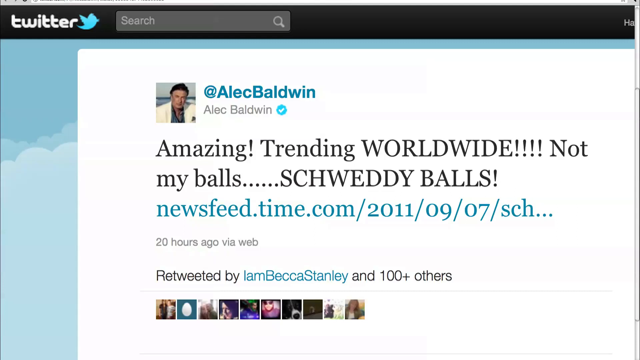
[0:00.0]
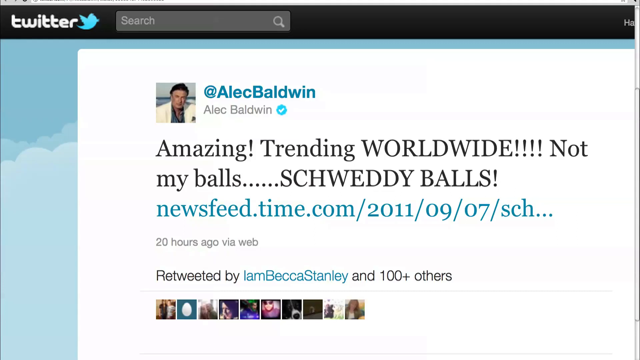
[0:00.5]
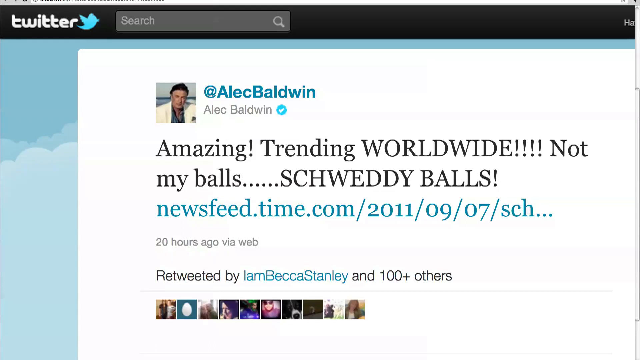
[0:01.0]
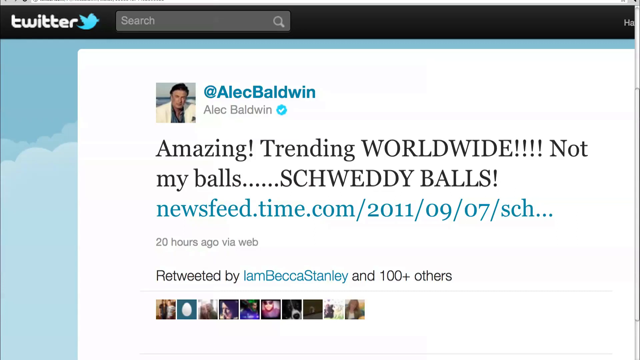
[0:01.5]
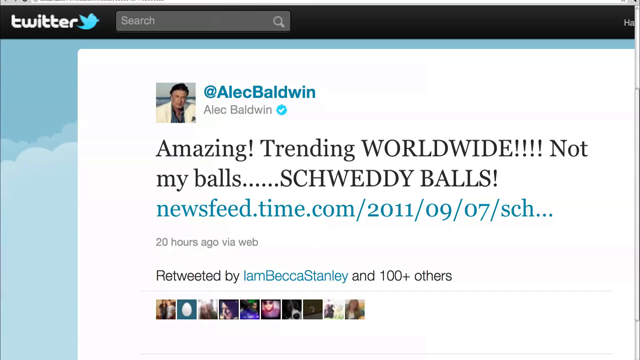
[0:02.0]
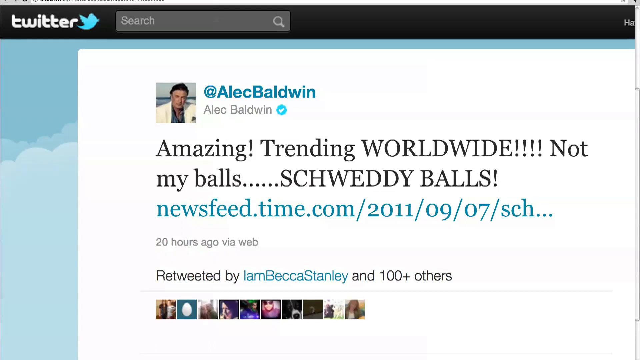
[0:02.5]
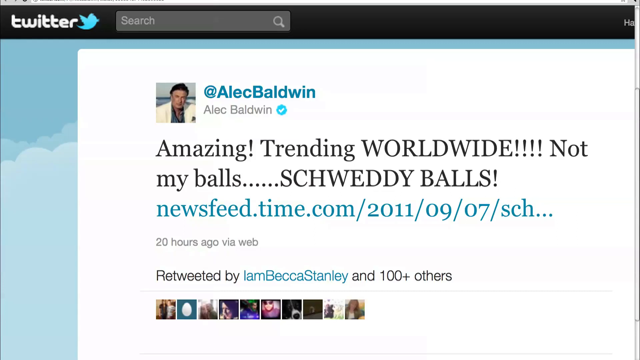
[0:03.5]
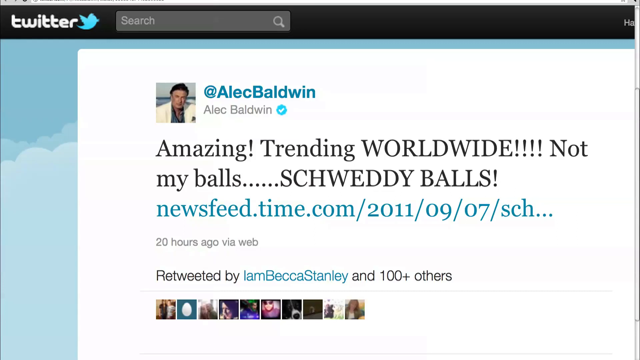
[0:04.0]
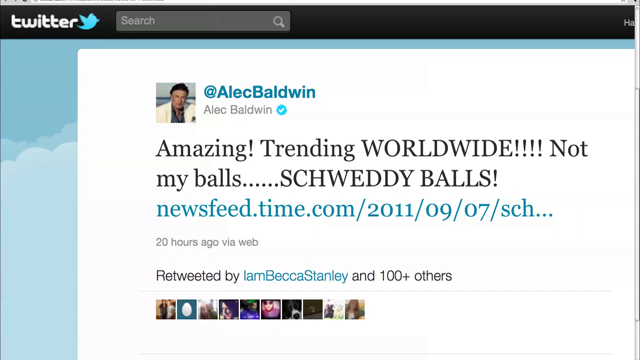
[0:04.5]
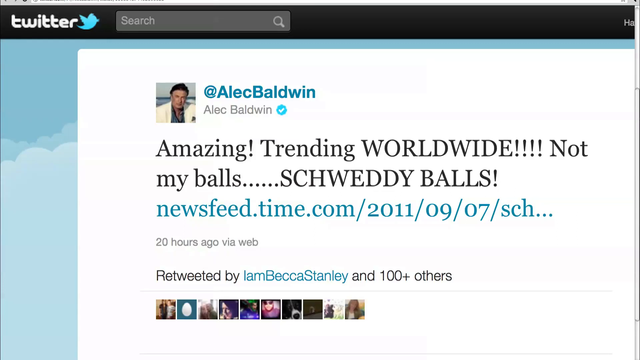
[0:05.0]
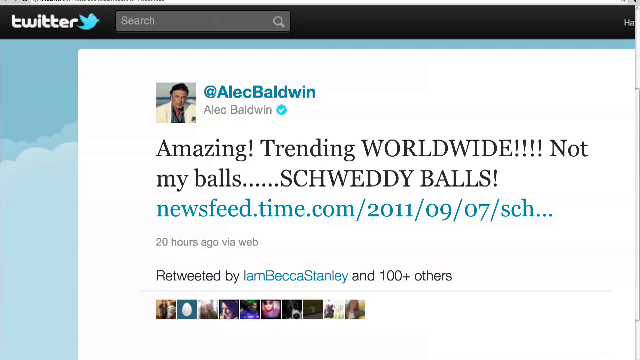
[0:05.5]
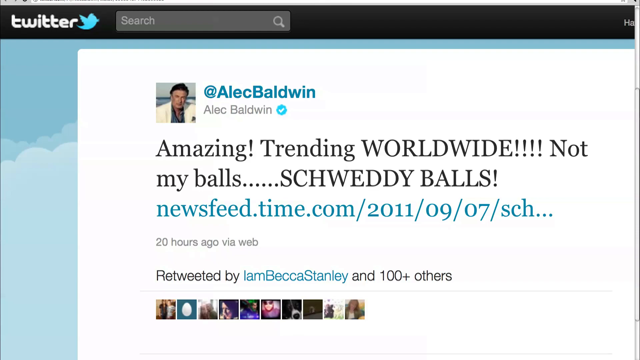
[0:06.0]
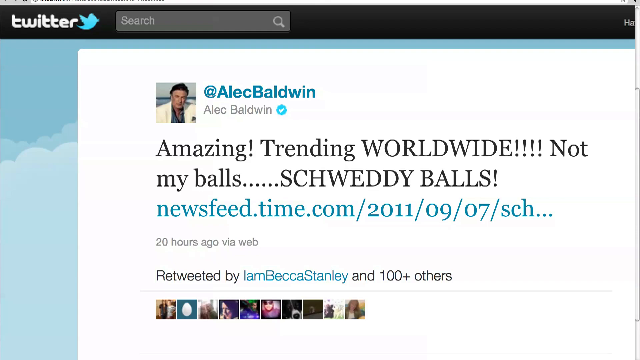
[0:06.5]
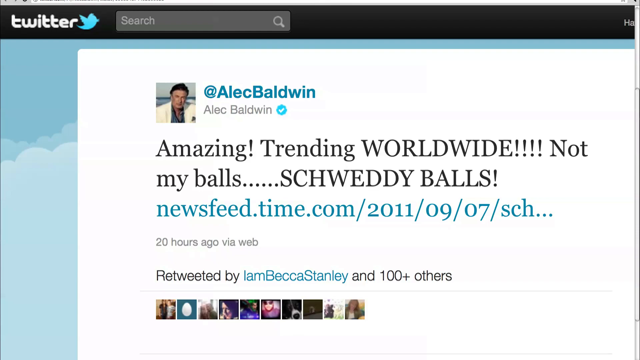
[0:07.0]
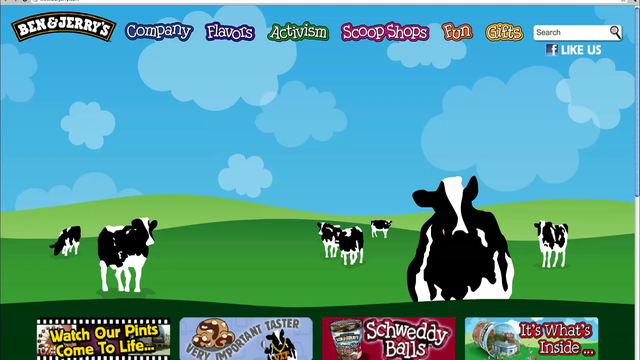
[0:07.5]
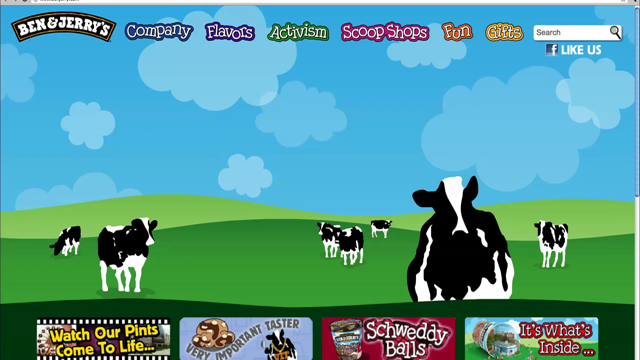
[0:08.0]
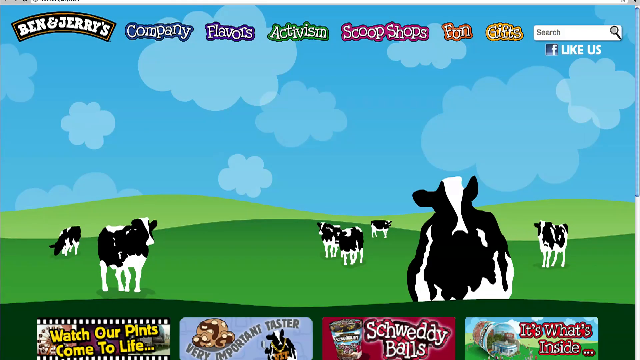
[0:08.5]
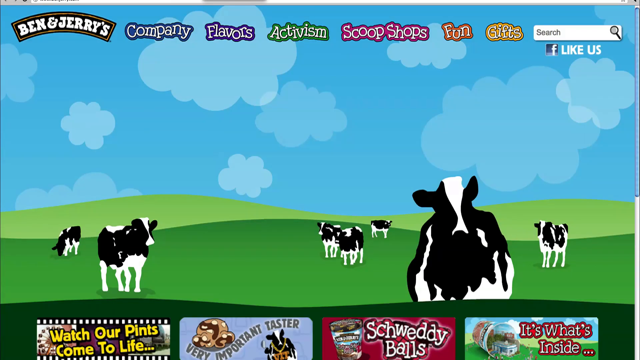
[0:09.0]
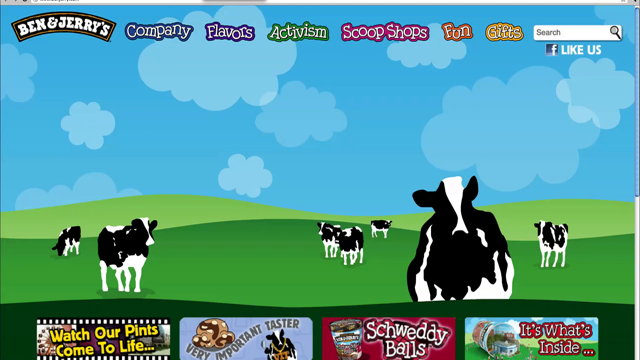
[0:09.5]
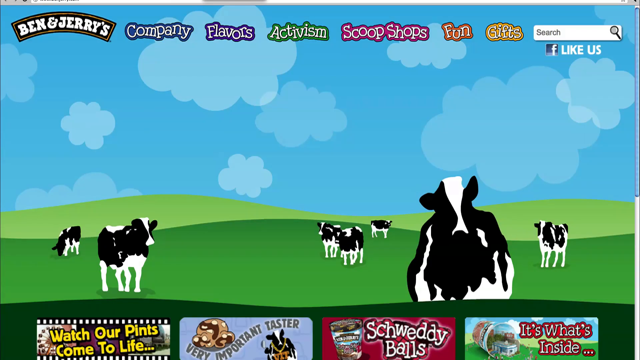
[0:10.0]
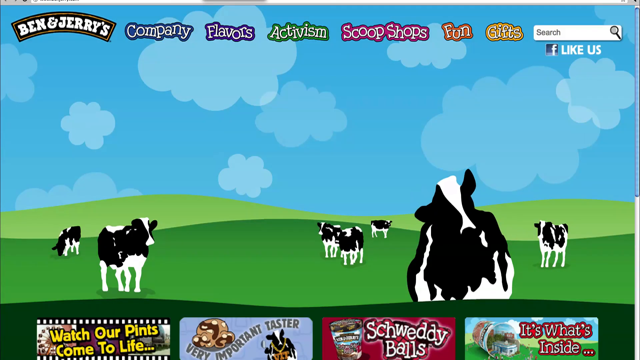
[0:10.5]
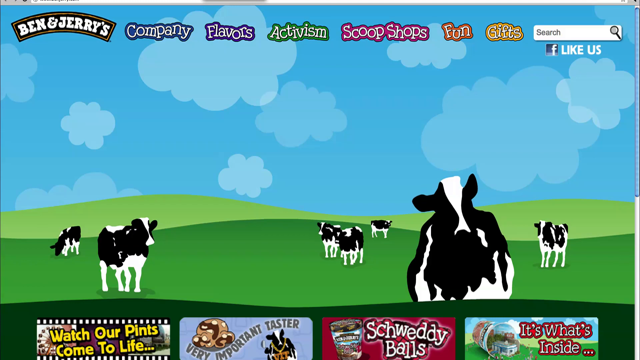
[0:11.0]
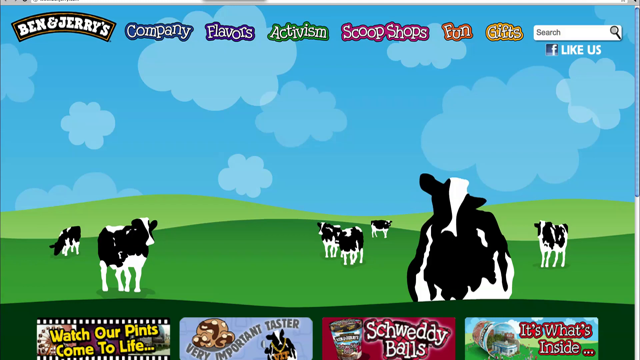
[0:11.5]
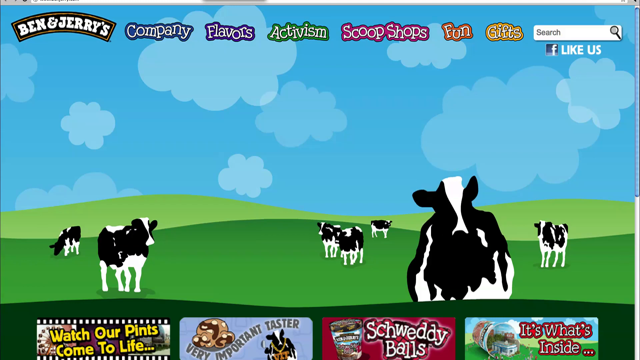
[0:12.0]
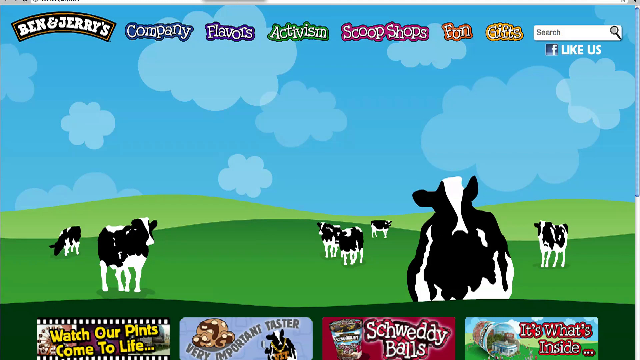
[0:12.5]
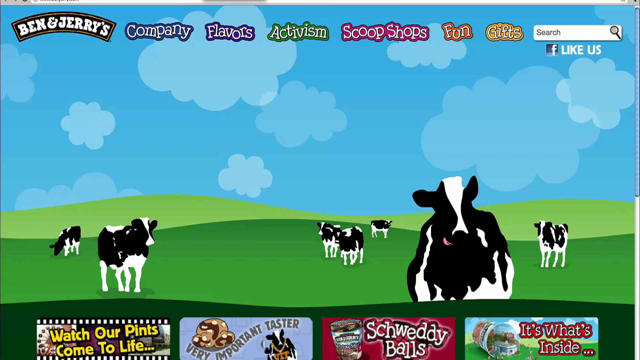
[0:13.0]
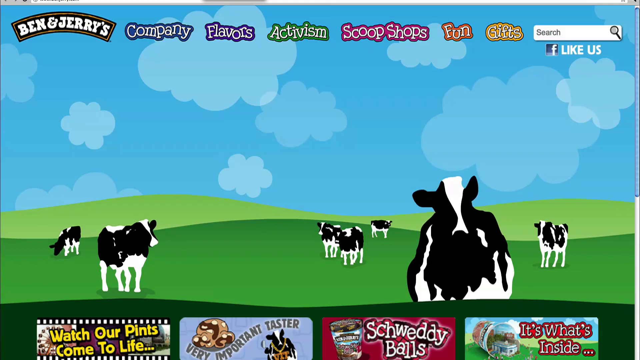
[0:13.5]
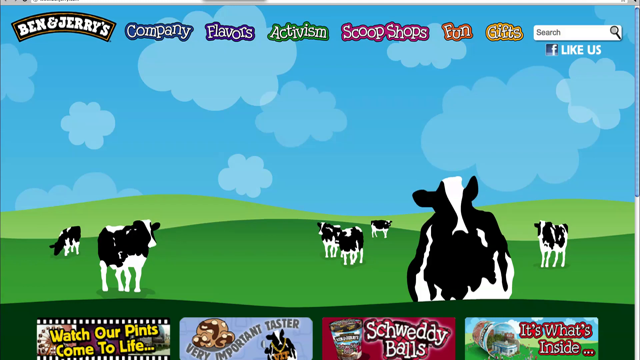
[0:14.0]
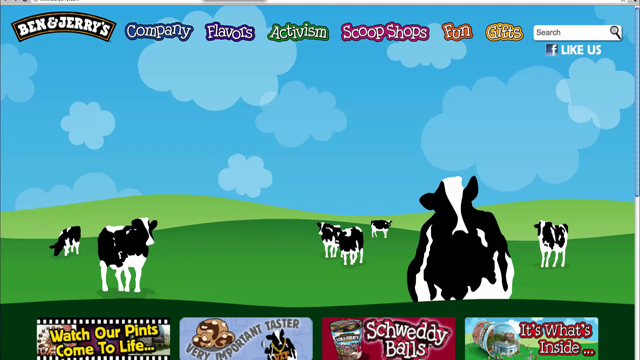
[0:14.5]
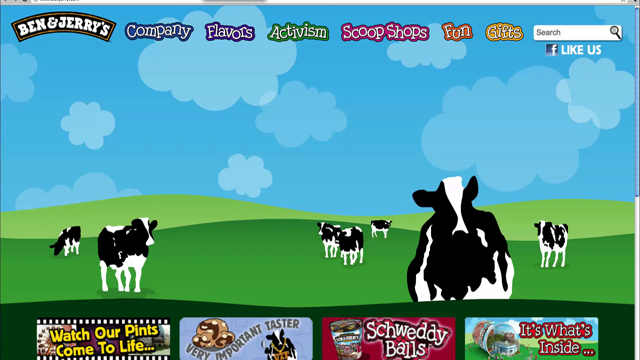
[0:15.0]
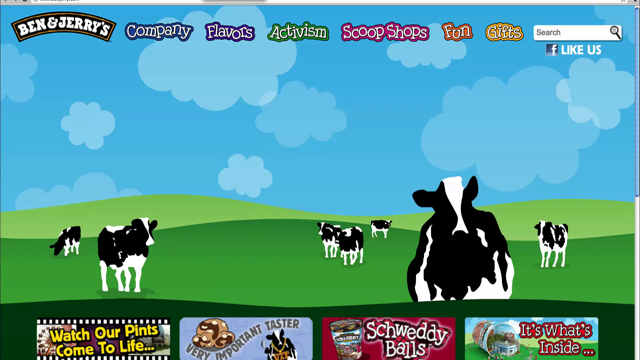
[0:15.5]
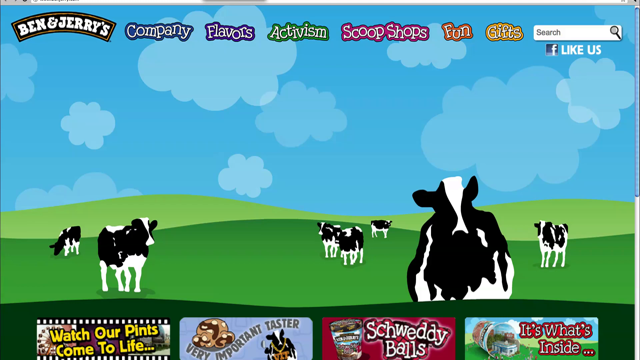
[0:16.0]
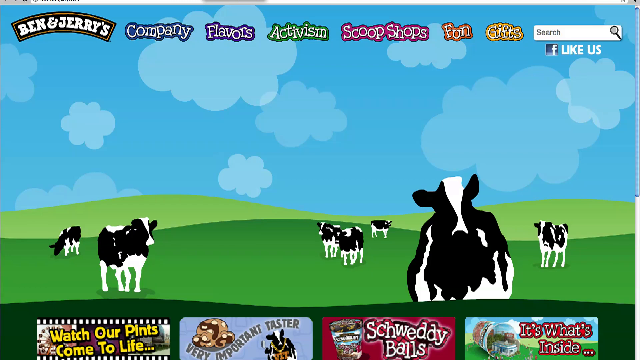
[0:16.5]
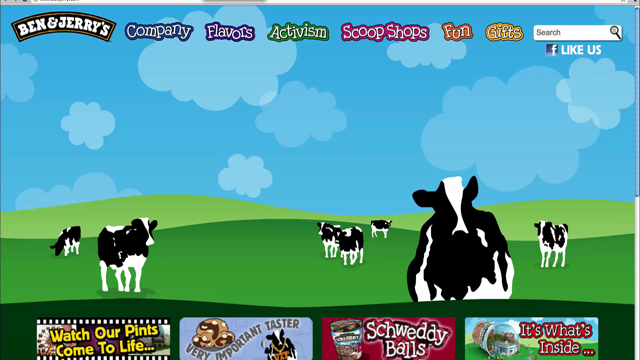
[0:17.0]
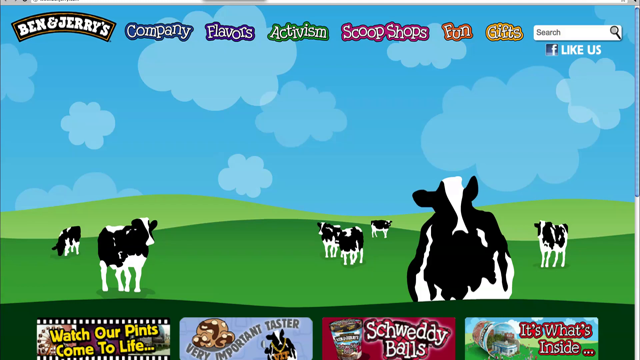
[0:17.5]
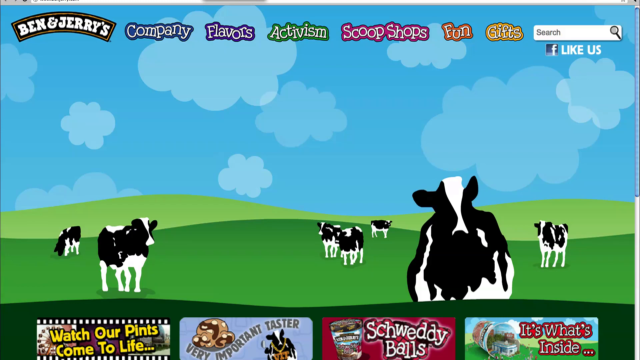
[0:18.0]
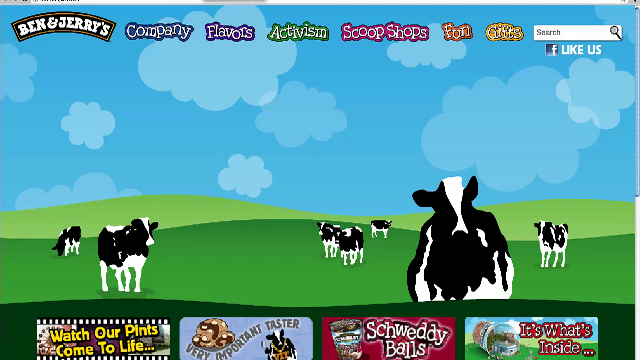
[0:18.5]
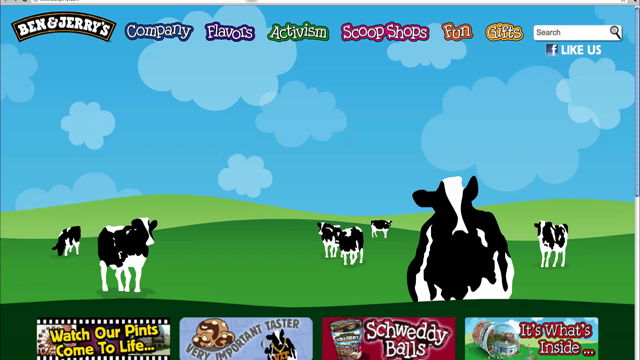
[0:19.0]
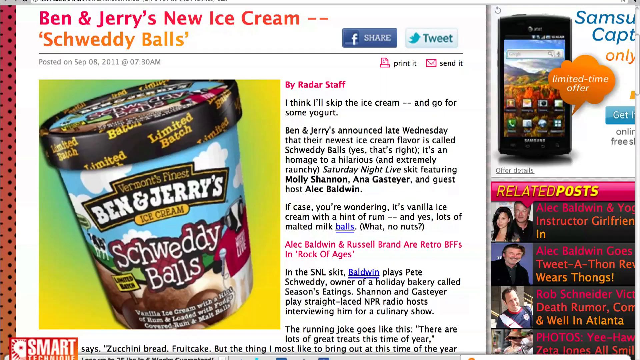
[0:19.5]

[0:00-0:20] A Twitter page is shown, with the Twitter logo, a blue bird, in the top left corner and a small search bar at the top next to the logo. The screen reads "Alec Baldwin" with a verified check mark, and black text with a link says "amazing trending worldwide not my balls sweaty balls" followed by "newsfeed.time.com/2011/09/07". The tweet was posted 20 hours ago via the web and was retweeted by "I am Becca Stanley" and a hundred plus other people. Next comes a Ben & Jerry's website with the categories "company", "flavors", "activism", "scoop shops", "fun" and "gifts", a small search bar next to them, and a Facebook "like us" button. Animated cows stand on green pastures under blue sky with white clouds; the cows shake their heads, kind of lick their lips, and twitch their ears. Small banners at the bottom say "watch our pints come to life", "important taste or sweaty balls" and "it's what's inside". Then a screen shows an article headed "Ben & Jerry's new ice cream, Schweddy Balls", posted on September 8, 2011 at 7:30 a.m., with a Facebook share button, a Twitter tweet button, and options to print or send via email. The text is pink and black and reads: "By radar staff. I think I'll skip the ice cream and go for some yogurt. Ben & Jerry announced late Wednesday that their newest ice cream flavor is called Schweddy Balls. Yes, that's right. It's an homage to a hilarious and extremely raunchy Saturday Night Live skit featuring Molly Shannon, Anna Gasteyer, and guest host Alec Baldwin. In case if you're wondering, it's vanilla ice cream with a hint of rum and yes, lots of malted milk balls. What? No nuts? Alec Baldwin and Russell Brand are retro BFFs and rock of ages. In the SNL skit, Baldwin plays Pete Schweddy, owner of a holiday bakery called Seasons Eating. Shannon and Gasteyer play straight-laced NPR radio hosts interviewing him for a culinary show. The running joke goes like this, there are lots of great treats this time of year." Related posts appear on the right, with an advertisement for a Samsung phone above them.